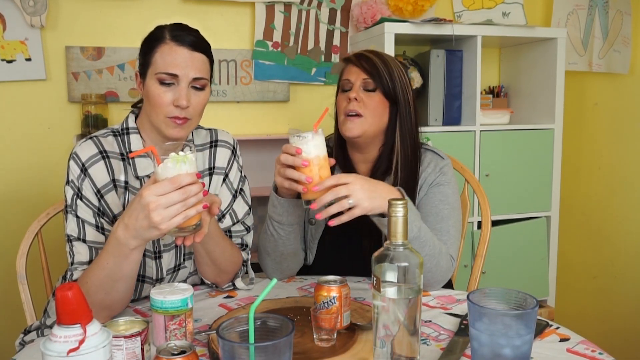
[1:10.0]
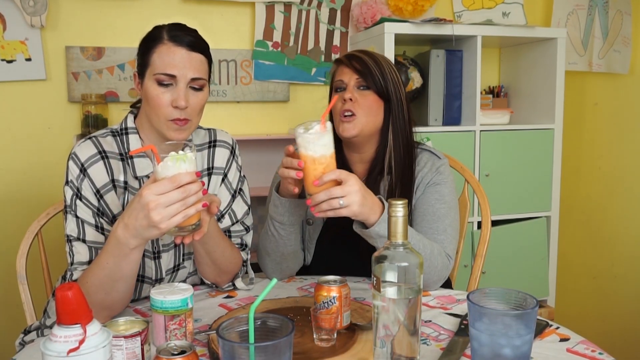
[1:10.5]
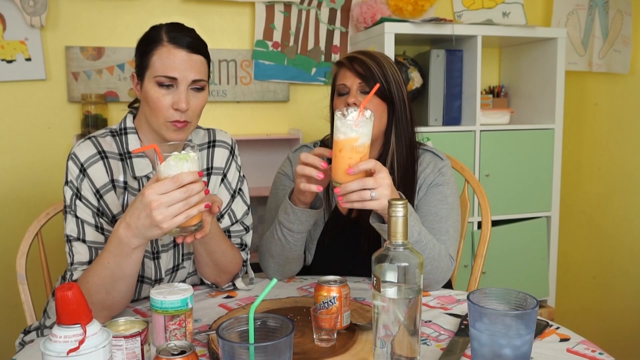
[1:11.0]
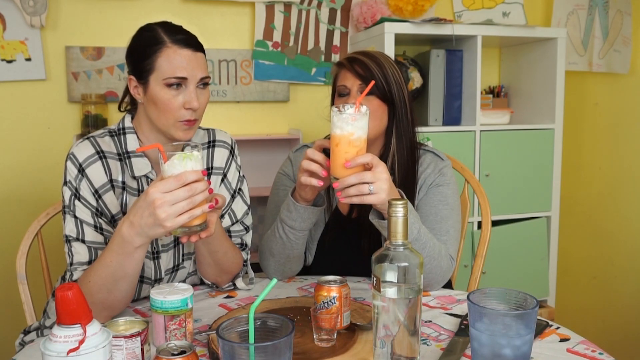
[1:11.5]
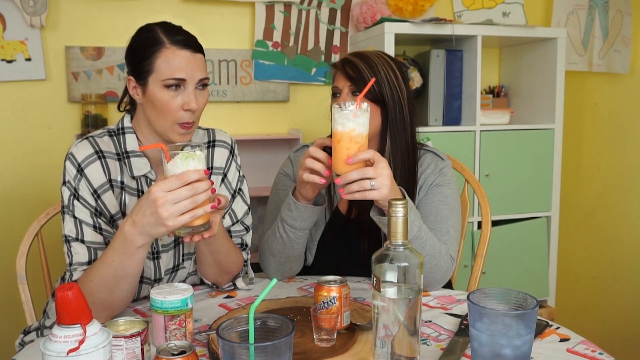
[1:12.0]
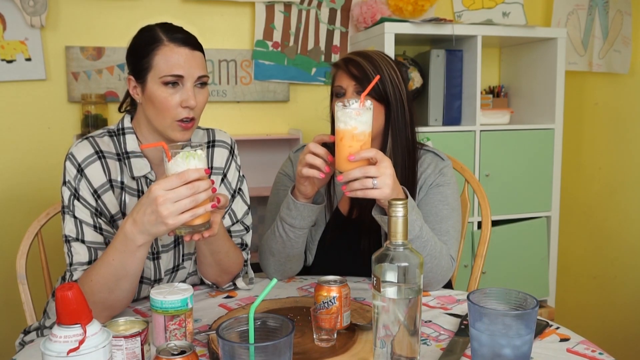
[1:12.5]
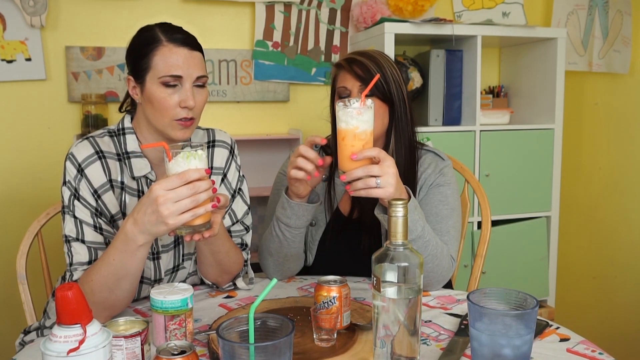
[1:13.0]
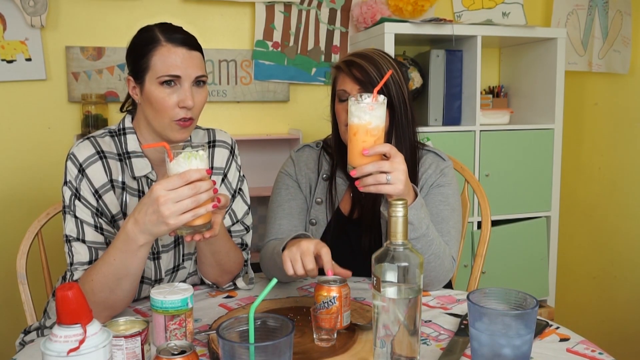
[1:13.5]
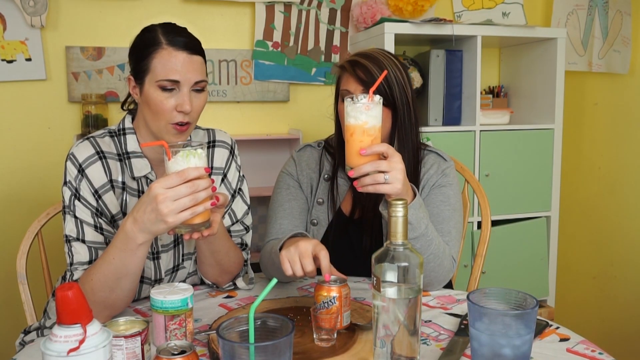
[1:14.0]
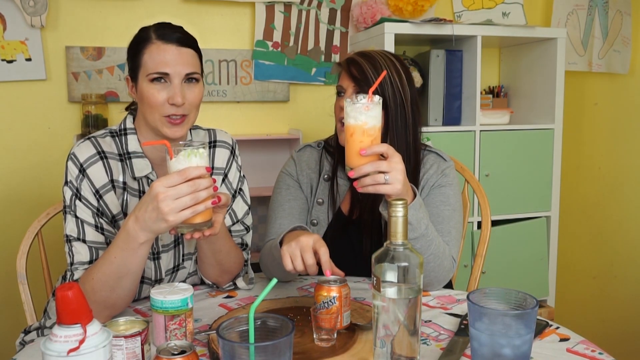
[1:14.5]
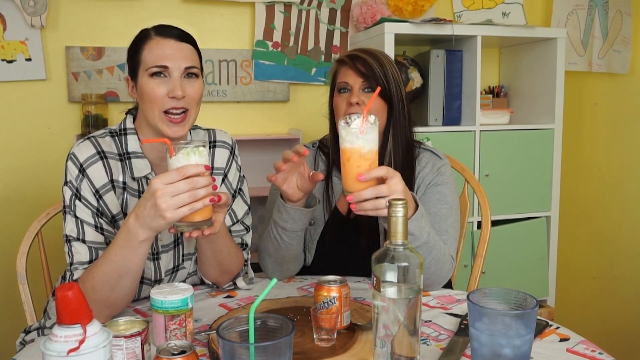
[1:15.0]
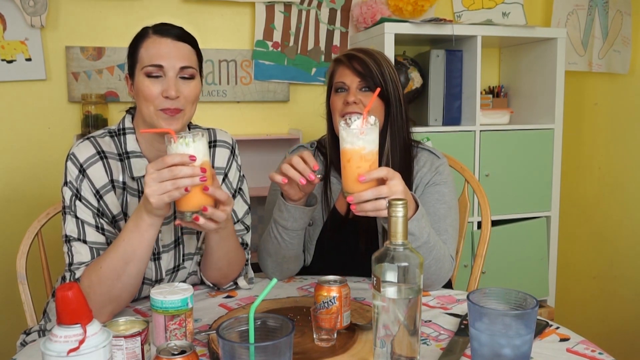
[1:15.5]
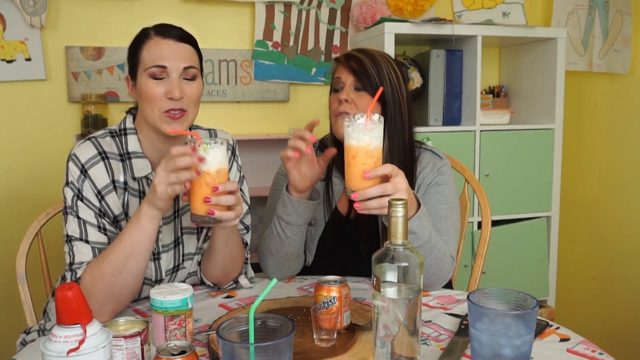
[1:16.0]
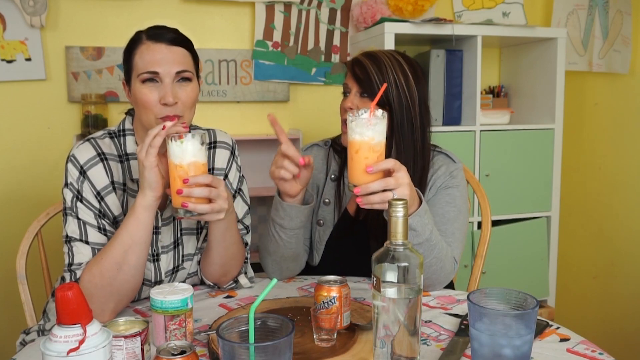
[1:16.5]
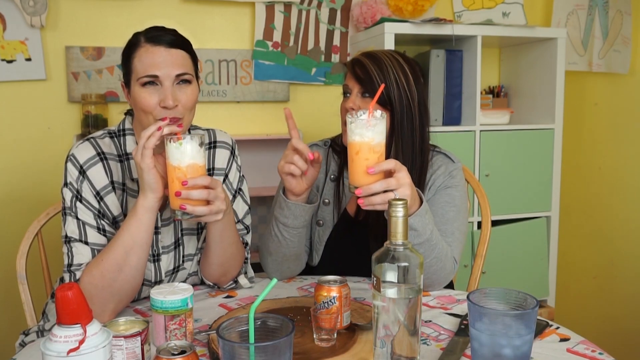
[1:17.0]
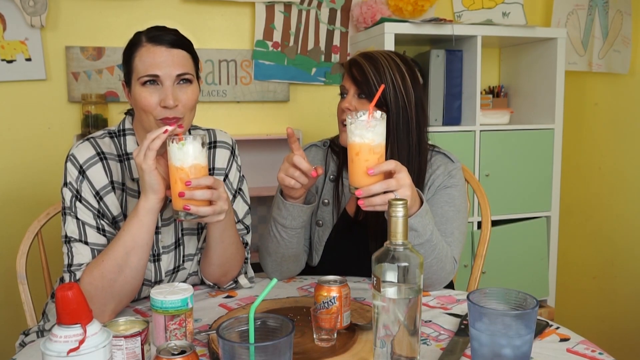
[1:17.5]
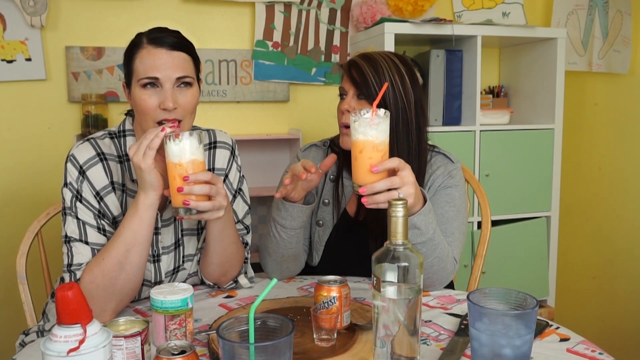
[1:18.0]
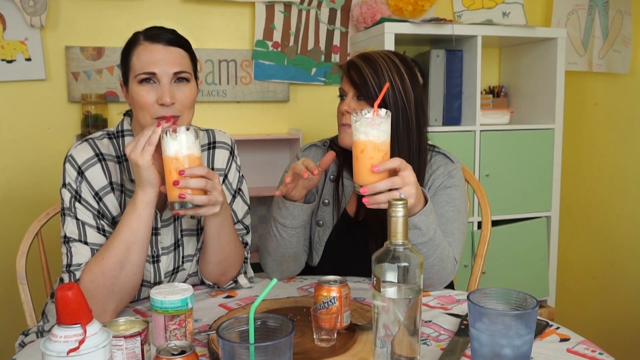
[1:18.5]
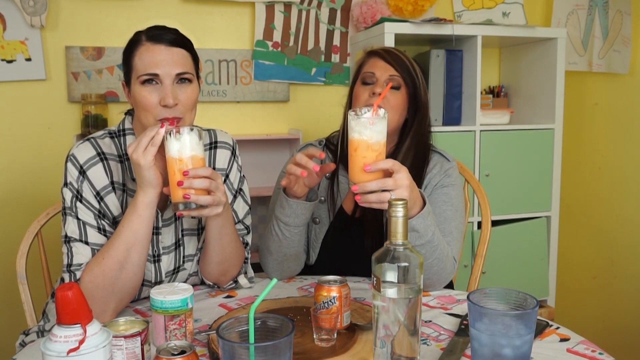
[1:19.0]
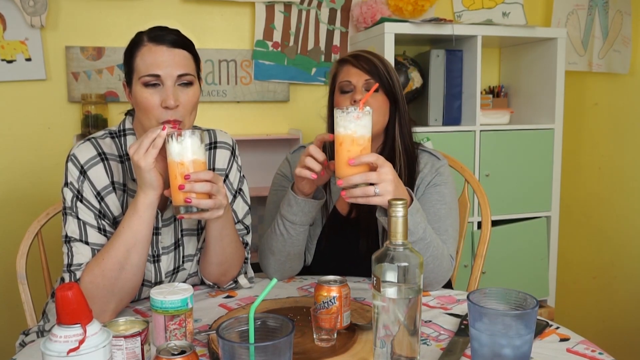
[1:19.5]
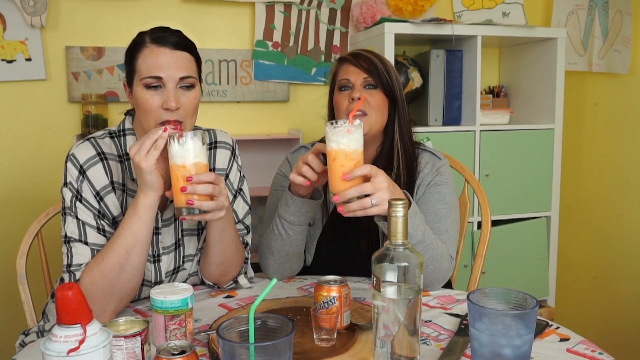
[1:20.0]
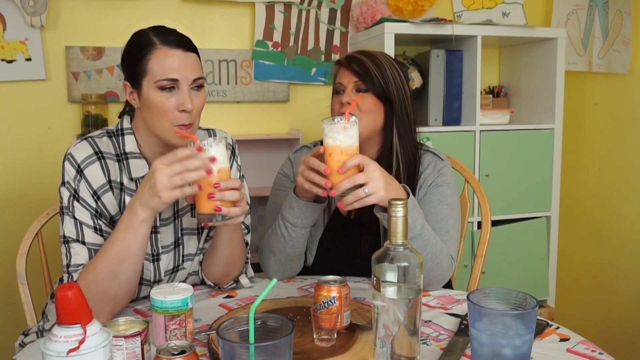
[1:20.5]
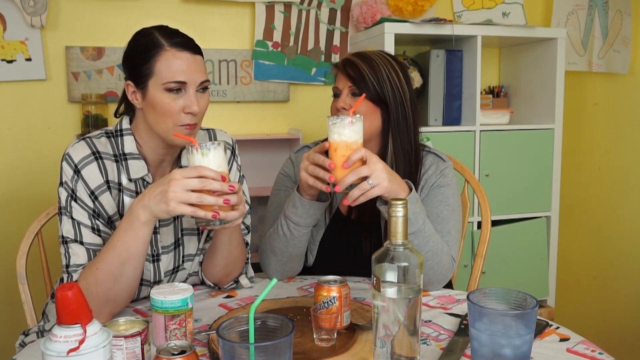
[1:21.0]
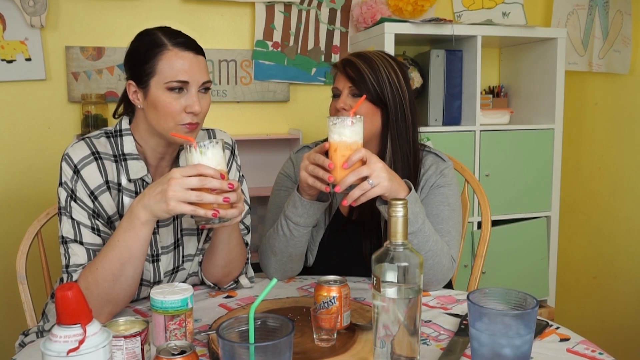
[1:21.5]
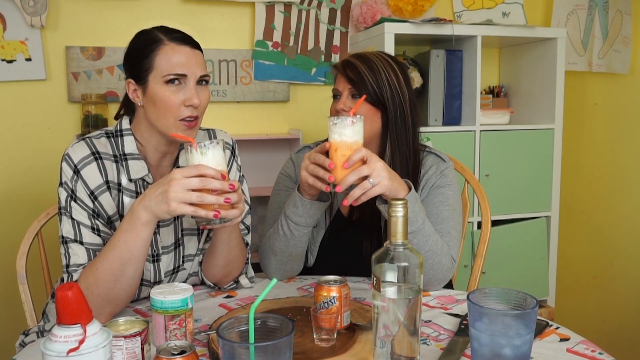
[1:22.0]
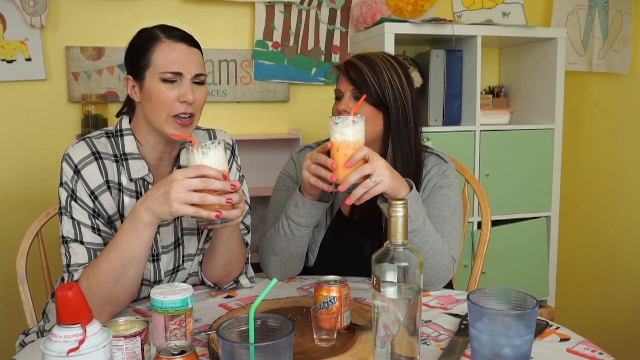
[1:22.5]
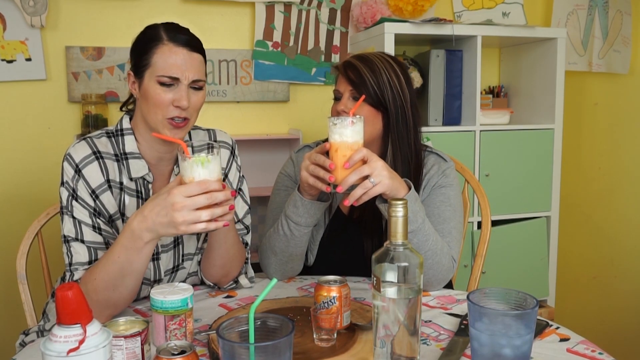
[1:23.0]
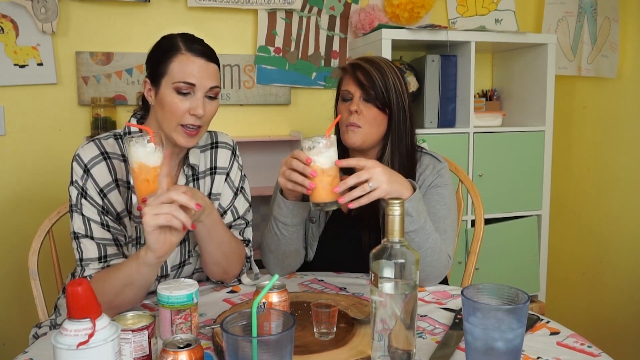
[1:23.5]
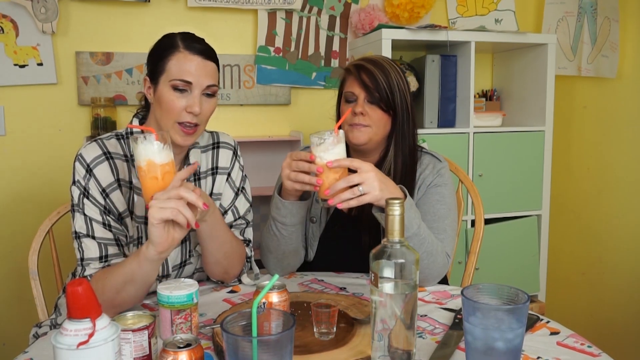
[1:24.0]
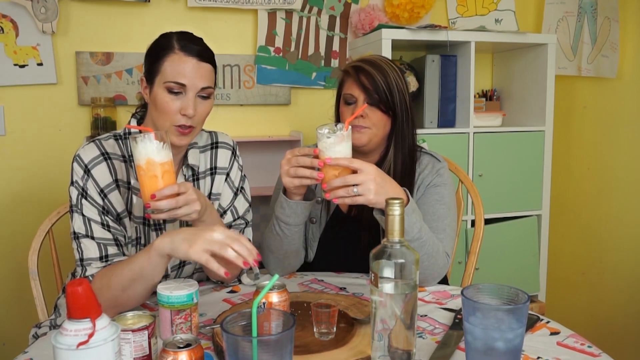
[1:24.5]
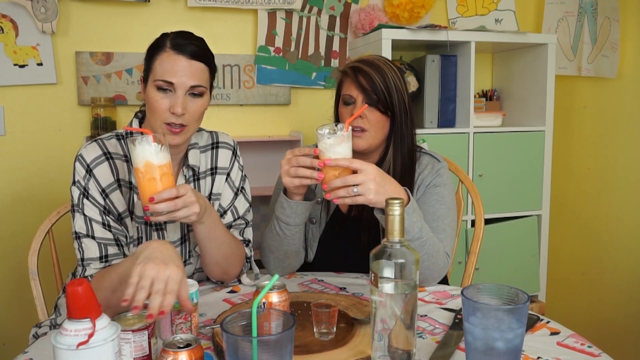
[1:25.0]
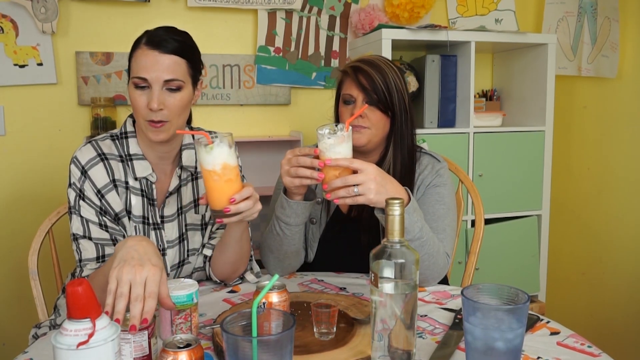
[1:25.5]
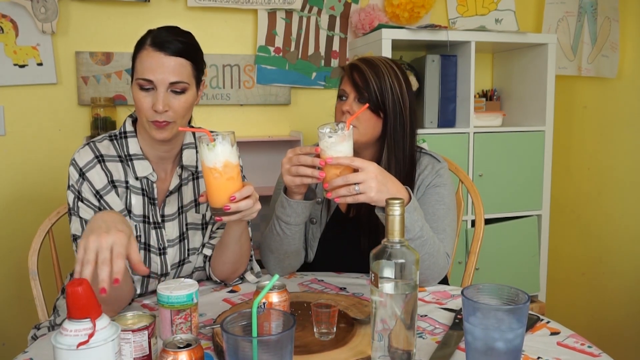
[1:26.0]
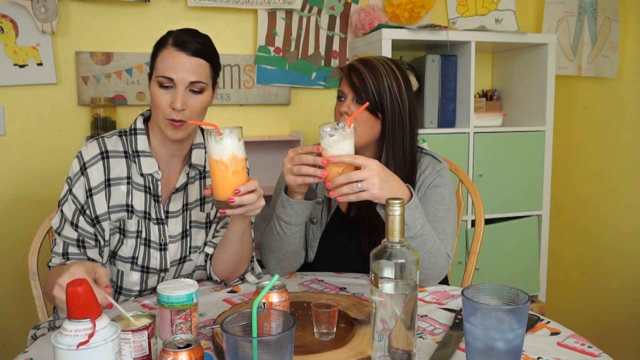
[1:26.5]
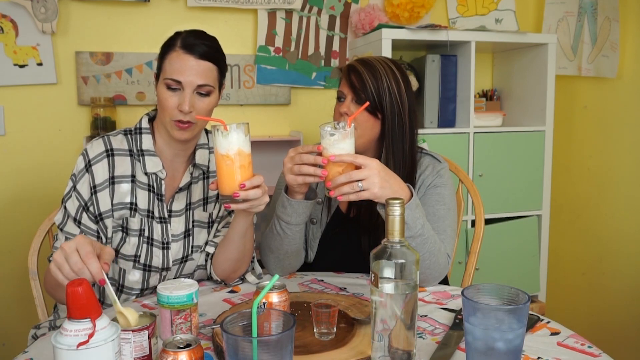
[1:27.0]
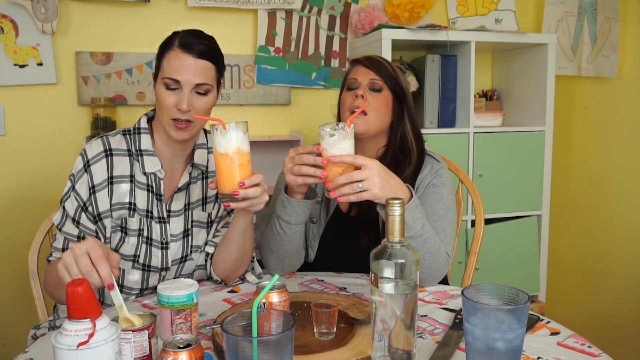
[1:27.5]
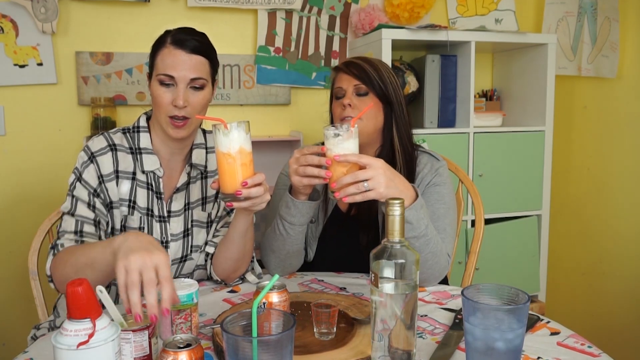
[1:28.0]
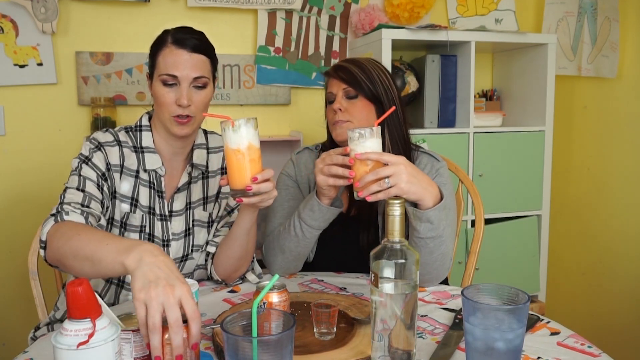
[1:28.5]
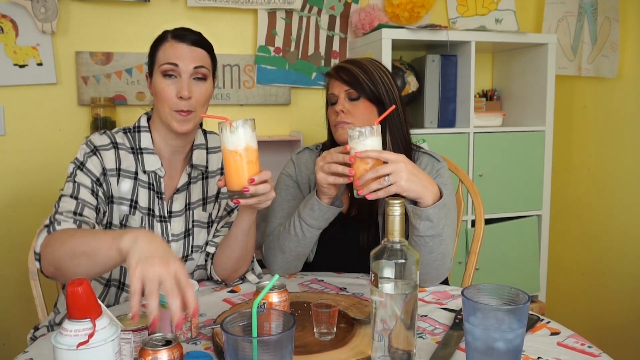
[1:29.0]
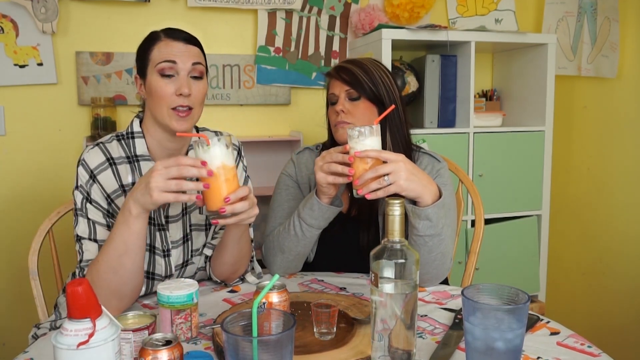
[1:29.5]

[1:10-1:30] Both women sit at the table in wooden chairs, wearing the same outfits against the same background. They seem to be conversing about the drink they have just tasted, both using orange straws, and seem to agree that it tastes pretty good. The woman on the left takes another sip while the woman on the right continues talking and pointing out information about the drink. The woman on the left smiles and smirks a little, and both seem to agree the drink tastes pretty good. The woman on the left touches some of the items on the table, then looks into the camera and keeps speaking, presumably about the drink. Both women talk to each other and smile as they speak.